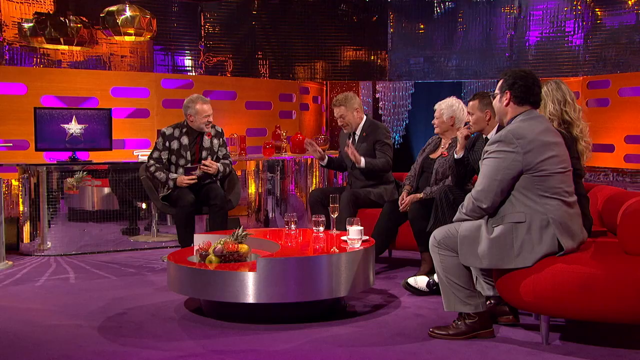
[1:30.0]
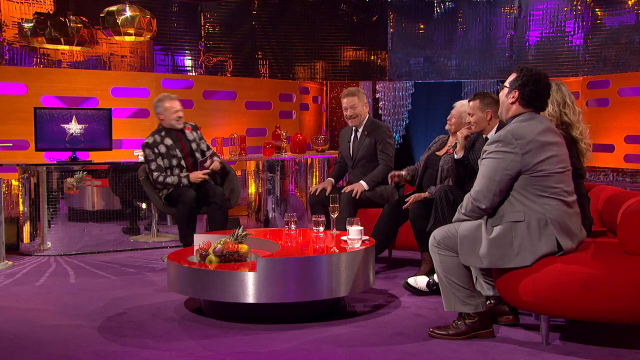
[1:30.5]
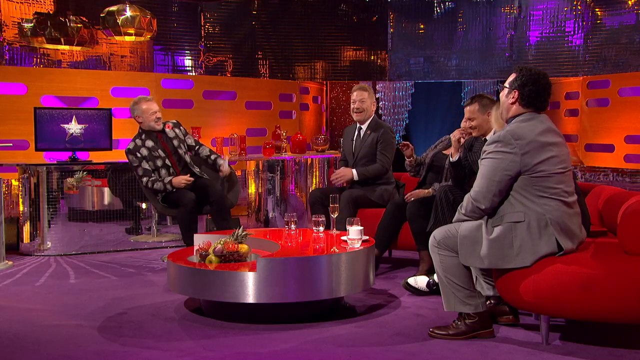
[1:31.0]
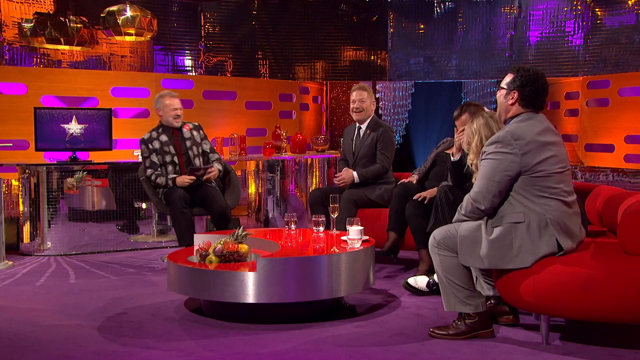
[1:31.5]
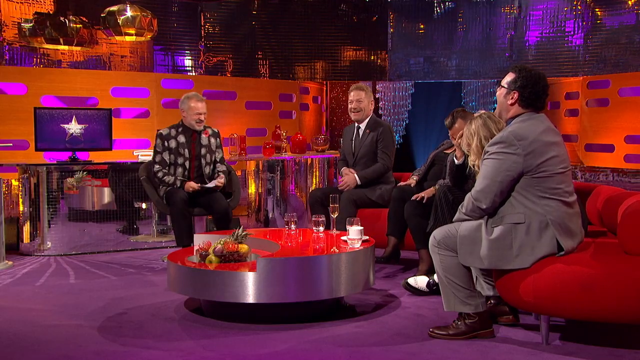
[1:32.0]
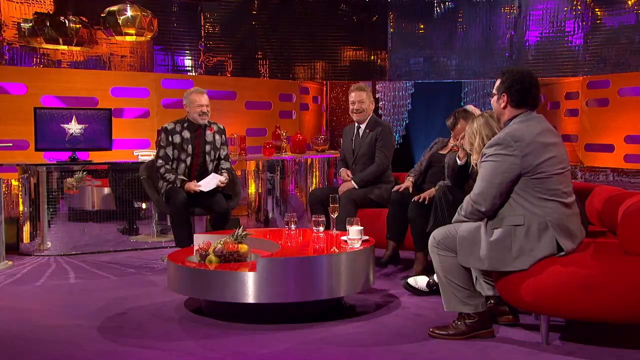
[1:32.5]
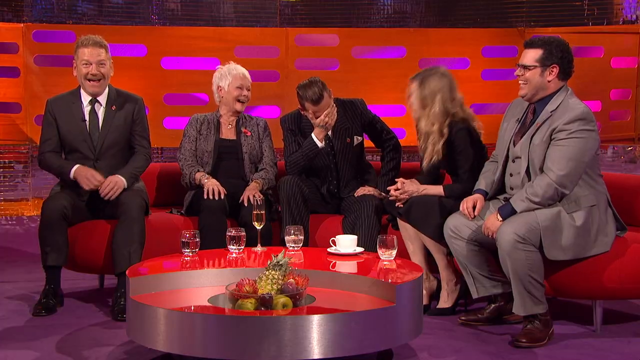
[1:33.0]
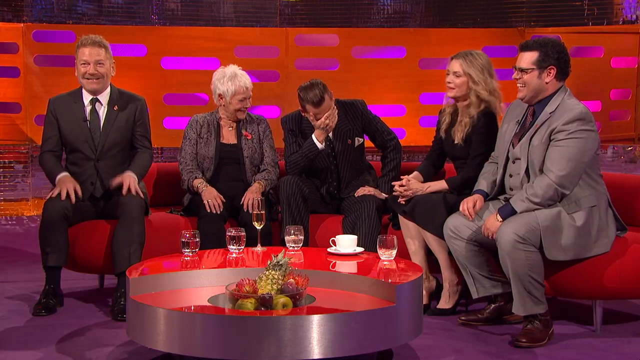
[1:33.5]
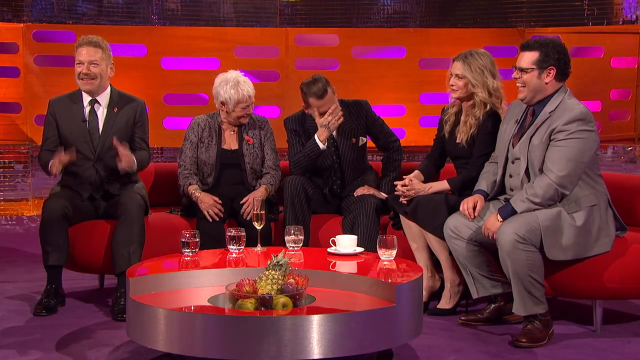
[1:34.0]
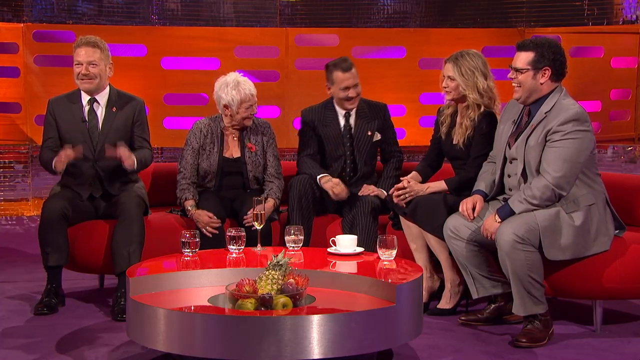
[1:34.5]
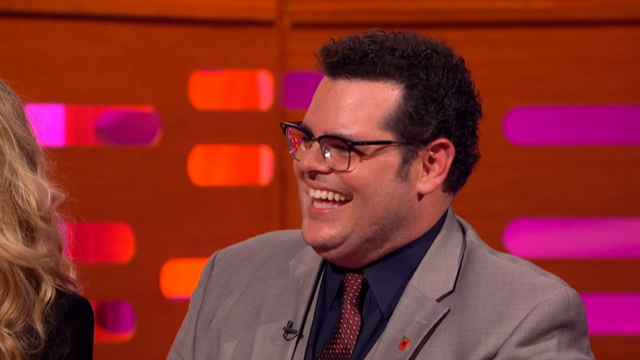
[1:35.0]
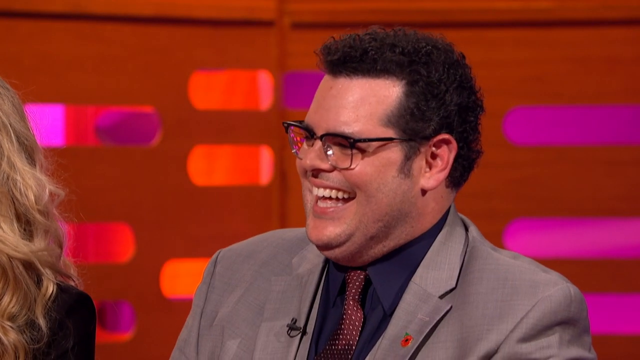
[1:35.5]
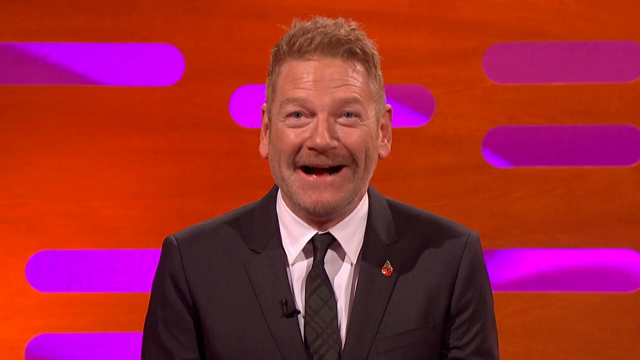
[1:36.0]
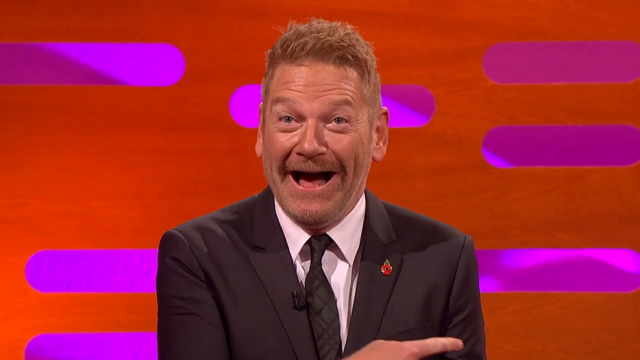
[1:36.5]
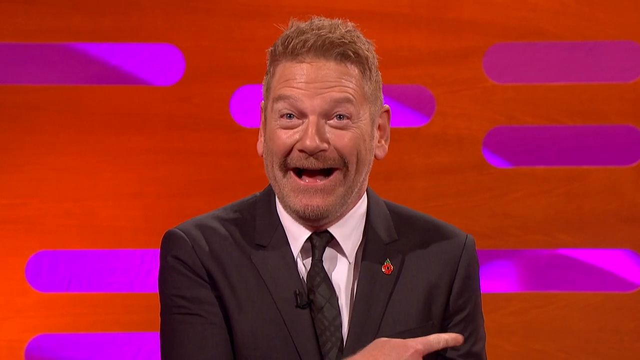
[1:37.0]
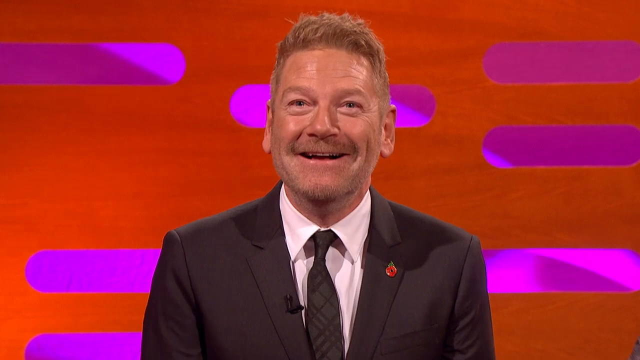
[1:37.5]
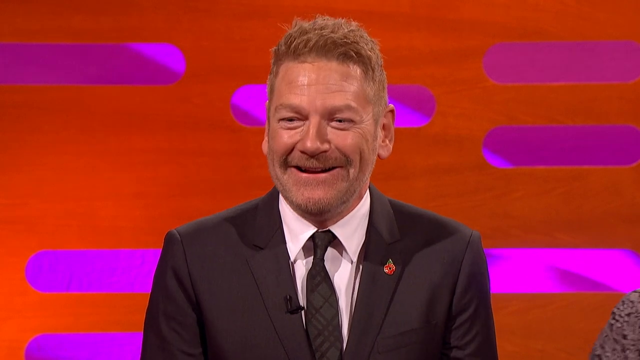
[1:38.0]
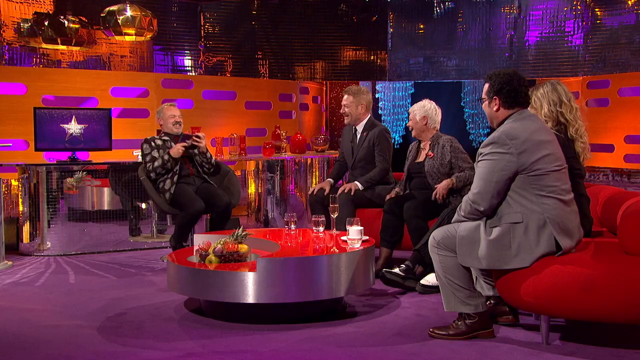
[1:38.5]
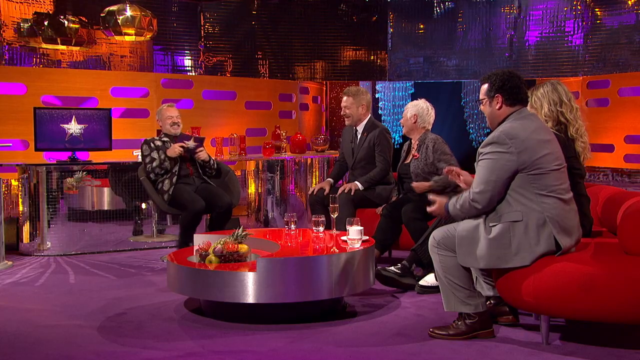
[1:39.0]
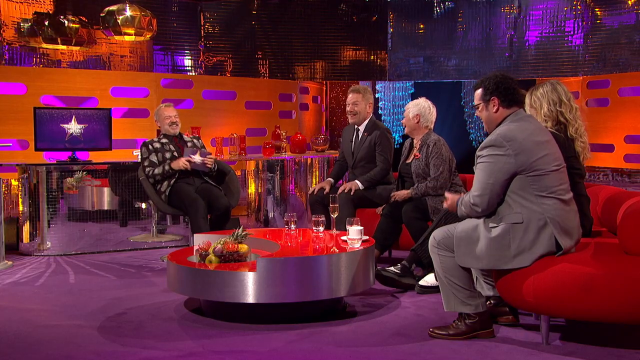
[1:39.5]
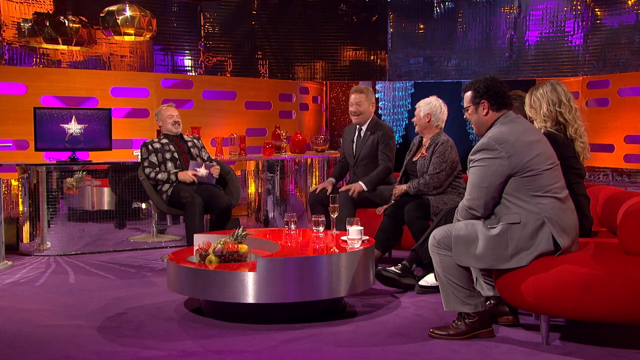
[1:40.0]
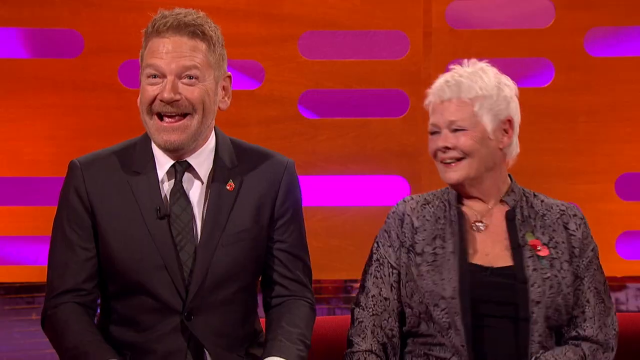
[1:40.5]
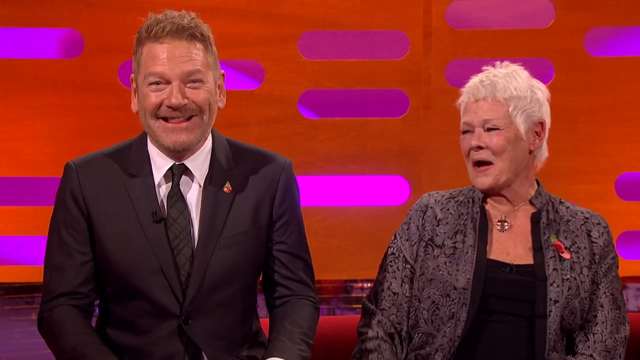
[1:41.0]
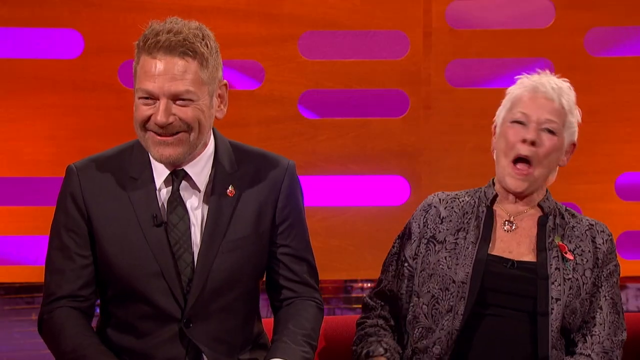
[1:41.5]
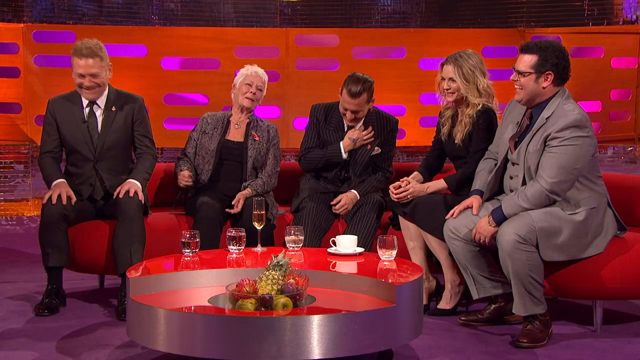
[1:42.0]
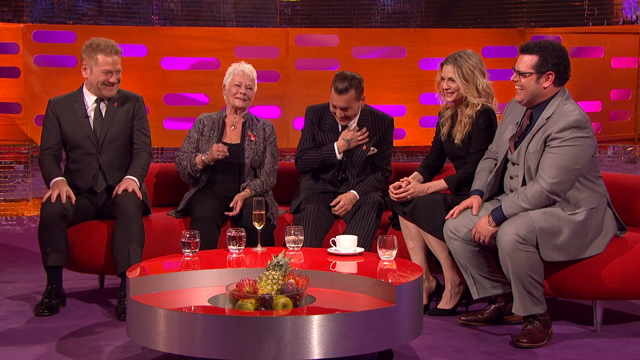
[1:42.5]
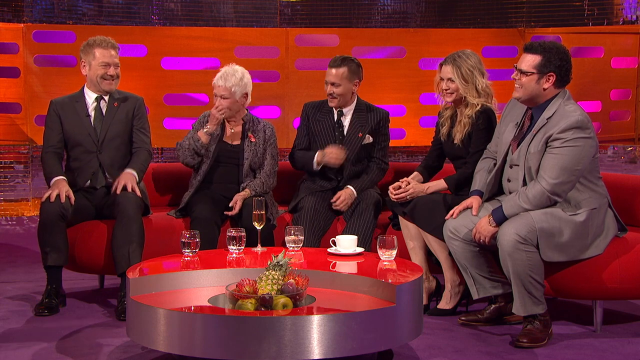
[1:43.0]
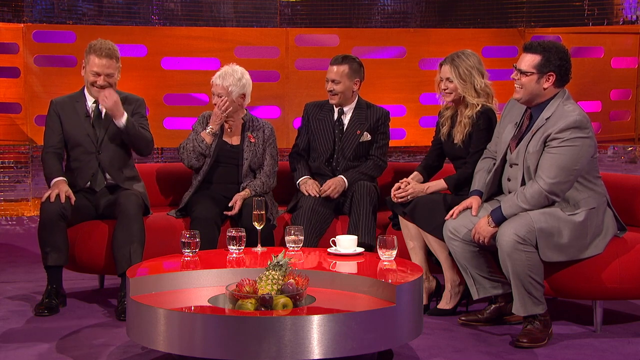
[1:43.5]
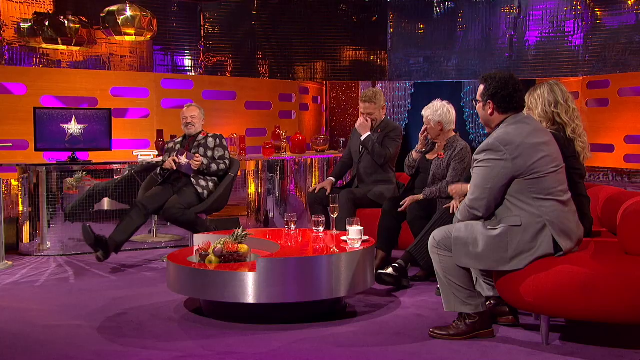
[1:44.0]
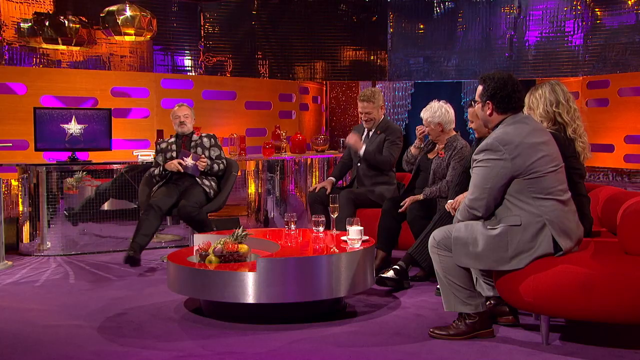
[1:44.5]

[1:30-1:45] The camera shows the entire group from a further angle. The white-haired woman leans back laughing with her right hand up, the host leans back toward his right, Johnny Depp has his face on his hand, and they all seem to be cracking up at something. The camera shows just the group on the seats, then the man in the gray suit by himself, laughing. Next the red-haired man points to his left while looking straight forward, laughing. The further view returns, with the host sitting back in his chair holding the cards, giggling and laughing. The camera then shows the red-haired man with the white-haired woman, both laughing, and then the people sitting on the chairs. Johnny Depp kind of scratches his collar, while the blonde-haired woman sits with her hands together on her knees, smiling but not reacting much. In the further view, the host is kind of swinging in his chair with his right foot forward. It seems the red-haired man made a joke, since the camera focused on him.